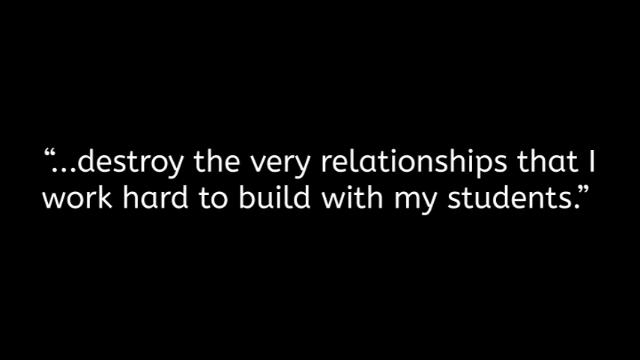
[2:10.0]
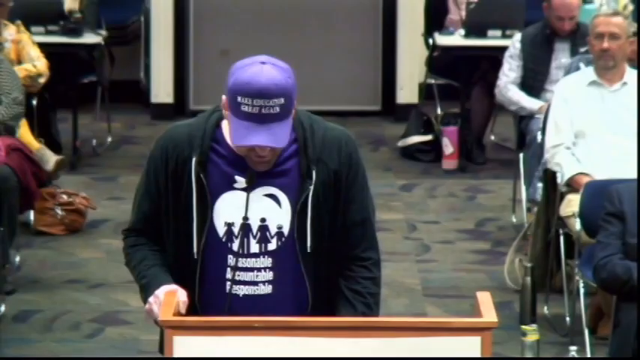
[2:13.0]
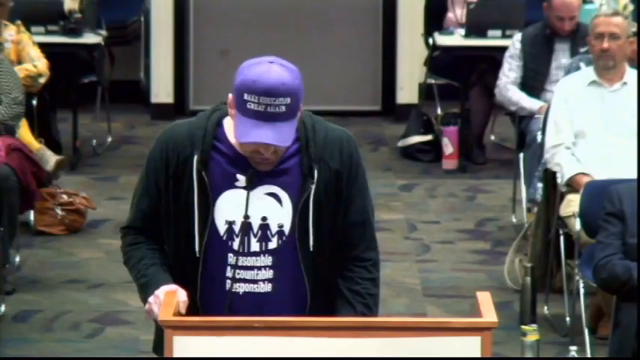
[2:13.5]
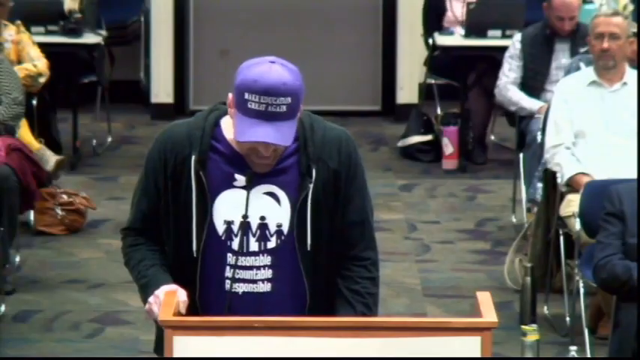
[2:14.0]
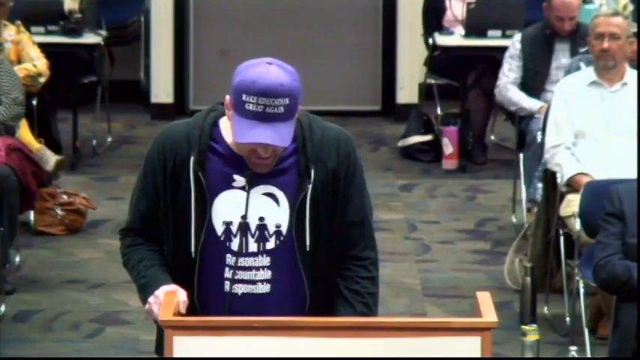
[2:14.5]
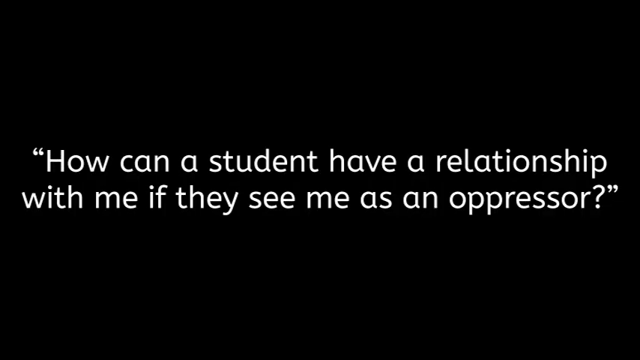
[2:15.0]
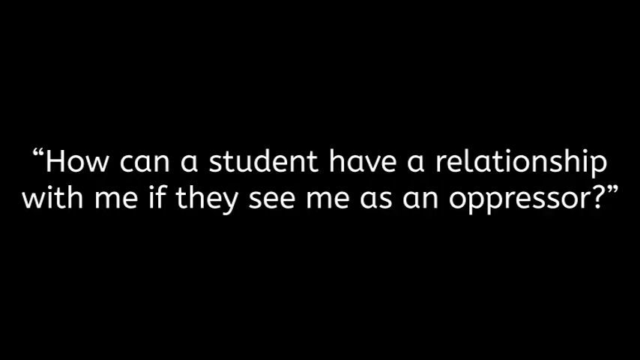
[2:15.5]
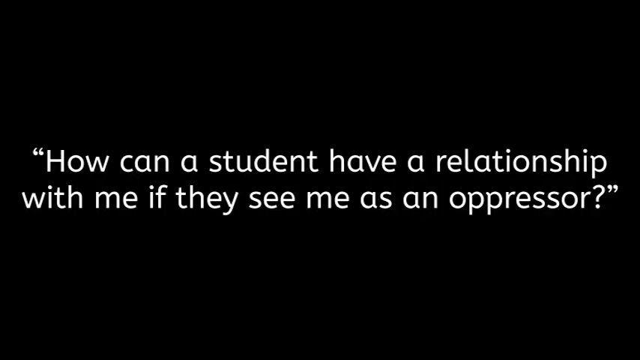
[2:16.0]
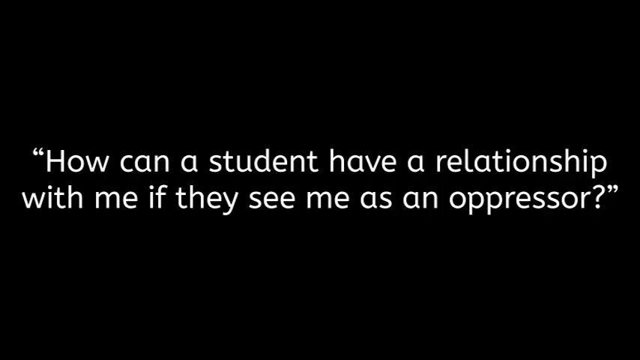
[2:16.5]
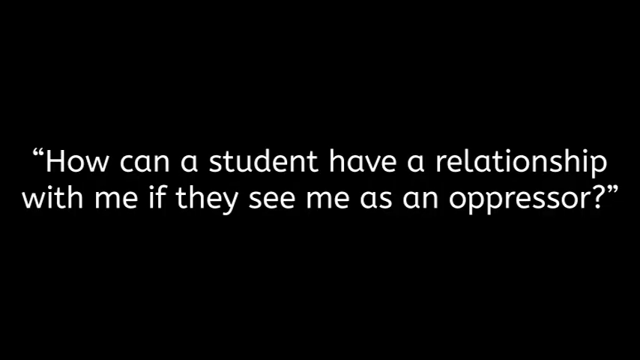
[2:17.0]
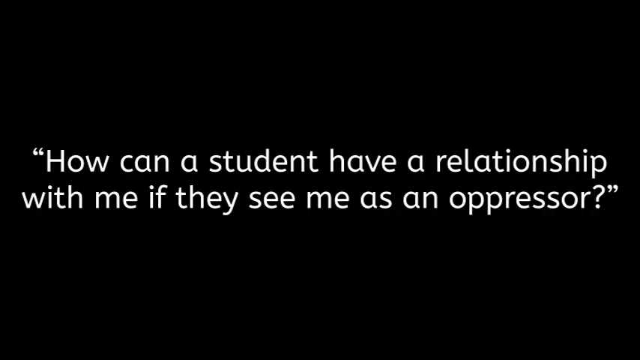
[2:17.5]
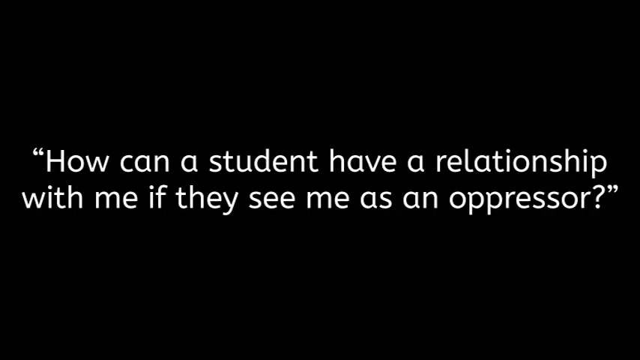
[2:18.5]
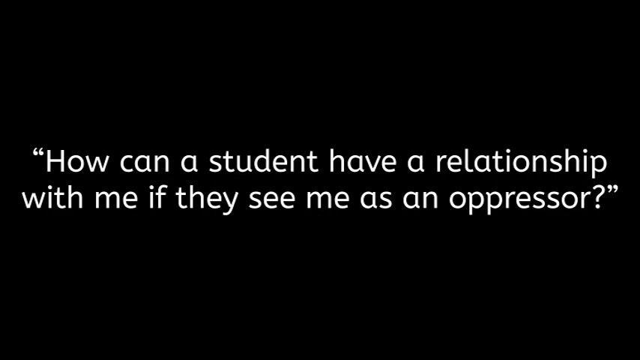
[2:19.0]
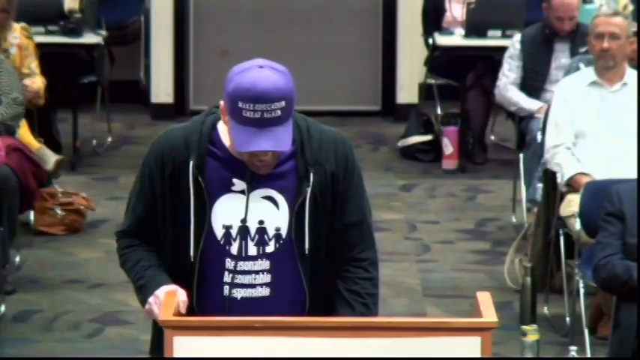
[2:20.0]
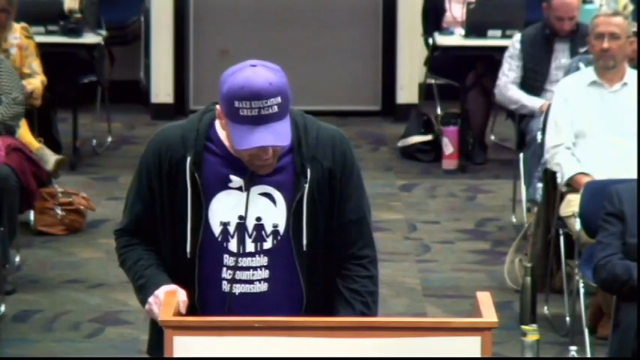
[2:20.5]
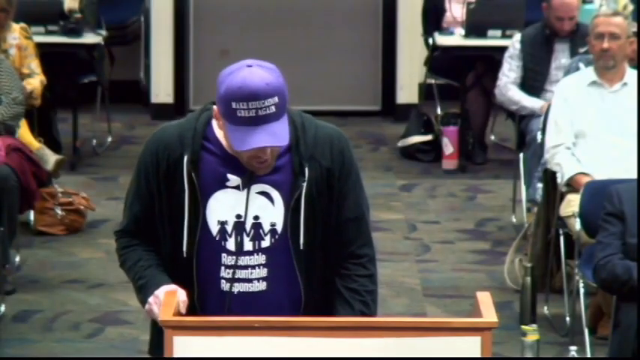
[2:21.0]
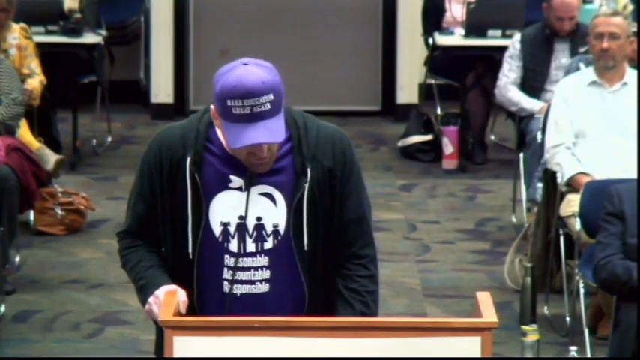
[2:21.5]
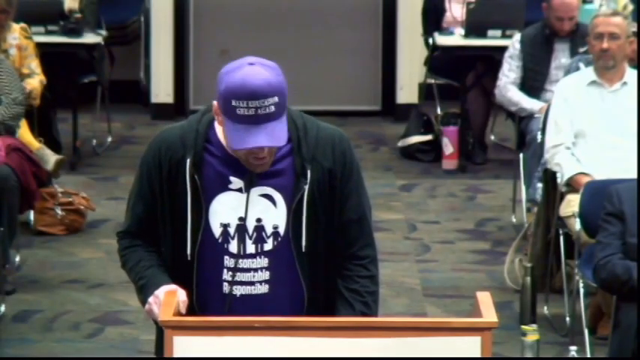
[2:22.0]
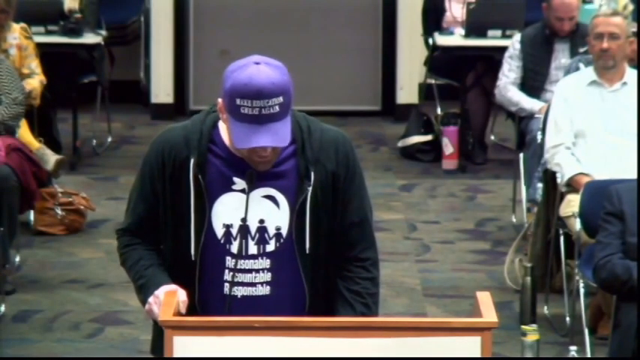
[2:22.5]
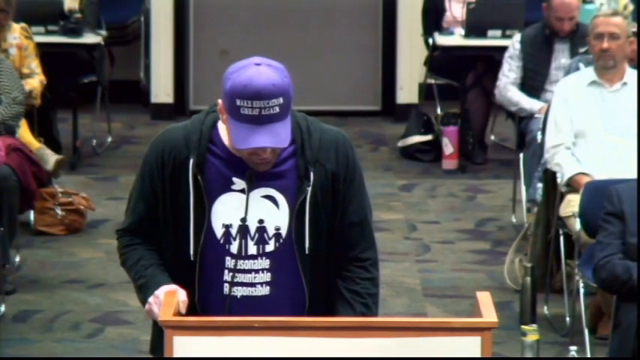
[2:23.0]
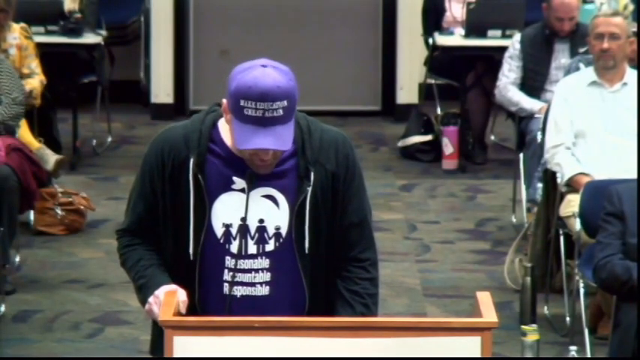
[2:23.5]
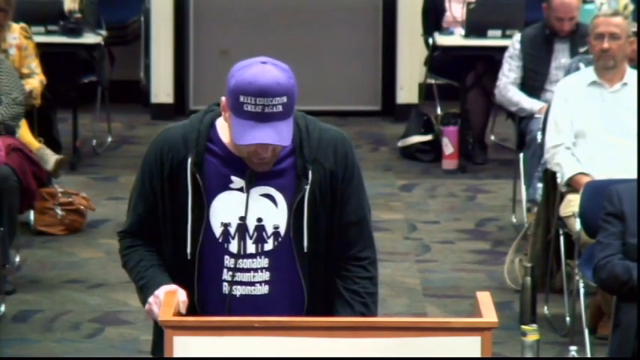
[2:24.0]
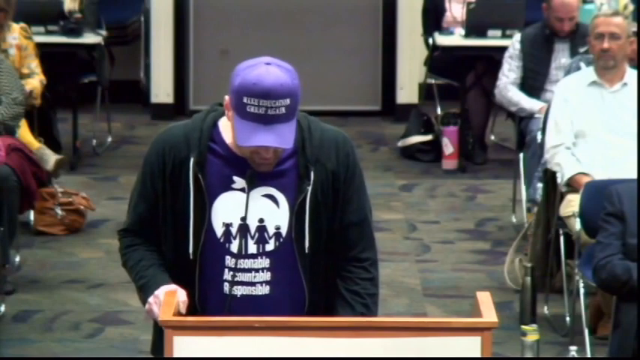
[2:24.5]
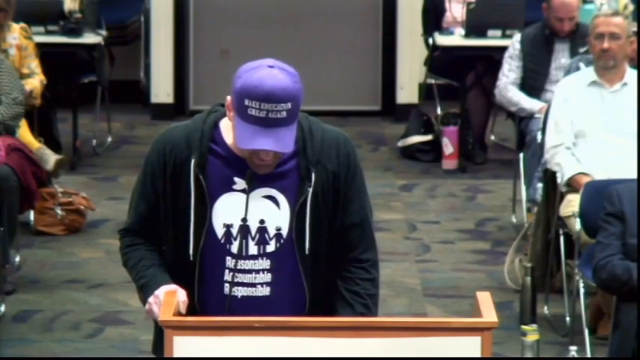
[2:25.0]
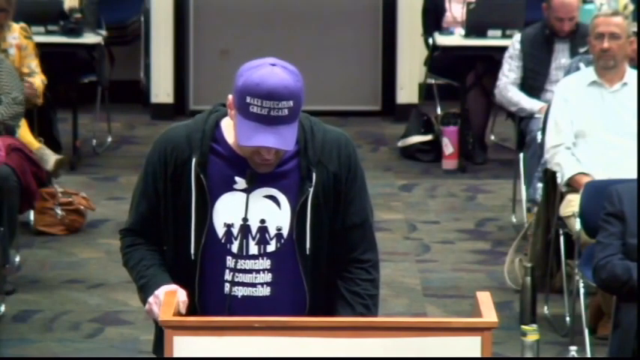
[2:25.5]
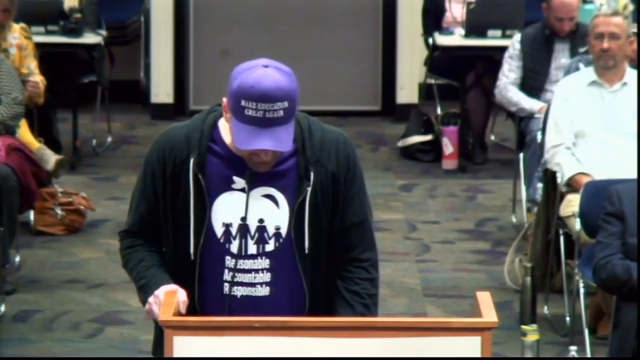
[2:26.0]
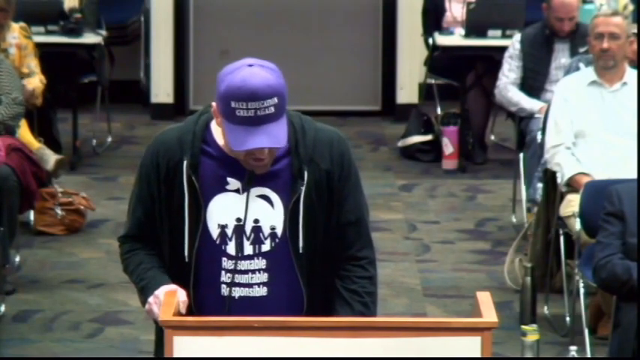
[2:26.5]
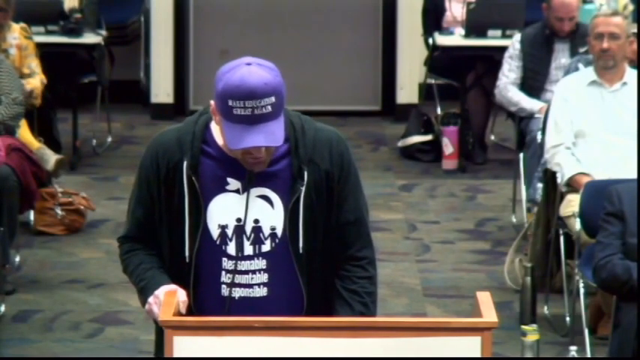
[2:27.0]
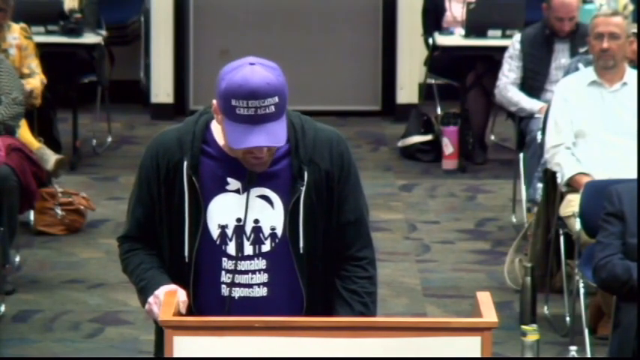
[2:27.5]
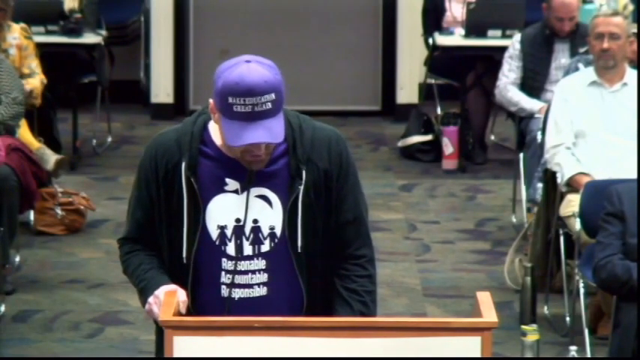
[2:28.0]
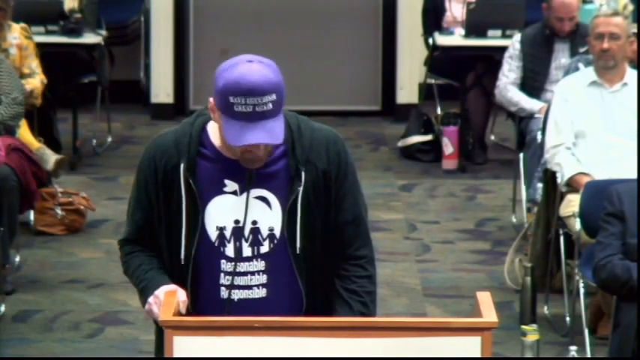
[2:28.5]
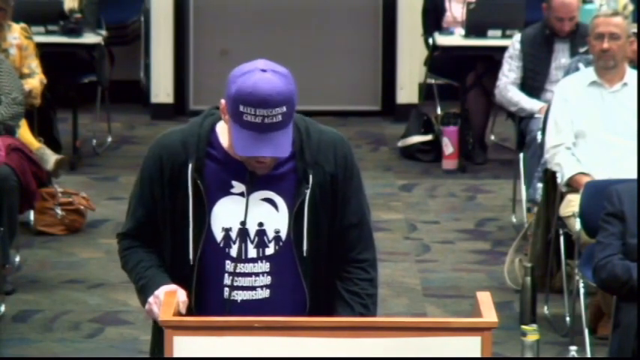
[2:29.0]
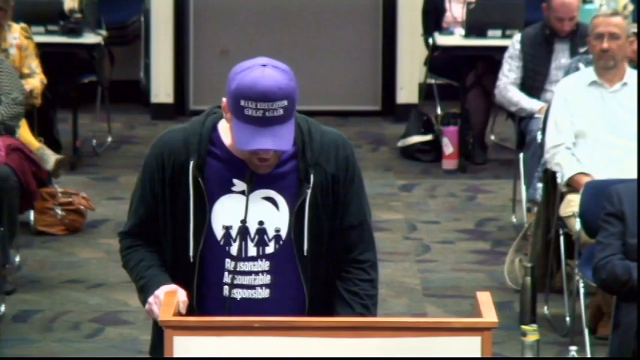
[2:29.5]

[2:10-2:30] A quote reads "destroy the very relationships that I work hard to build with my students." A man is shown talking, then another quote reads "how can a student have a relationship with me if they see me as an oppressor?" The video goes back to the man, who wears a purple shirt and a purple cap, and ends with the same quote, "destroy the very relationships that I work hard to build with my students." Judging from the quotes, the man is apparently a teacher at the school and does not seem very happy. More of the footage shows the quotes than the man himself talking.